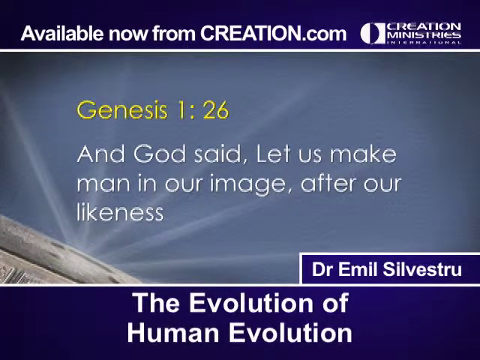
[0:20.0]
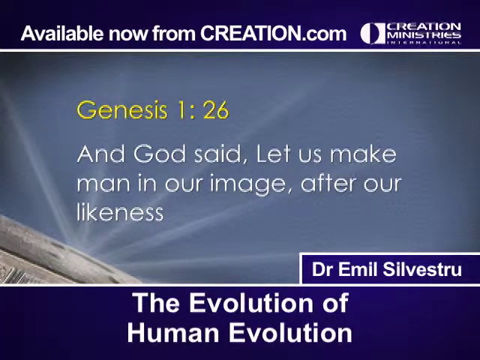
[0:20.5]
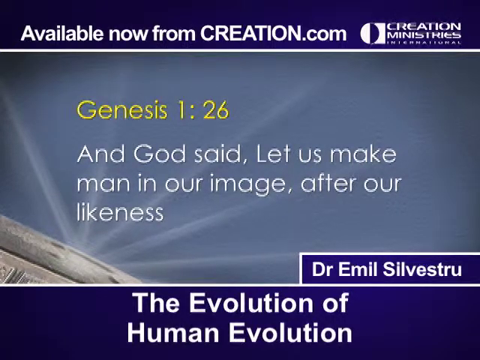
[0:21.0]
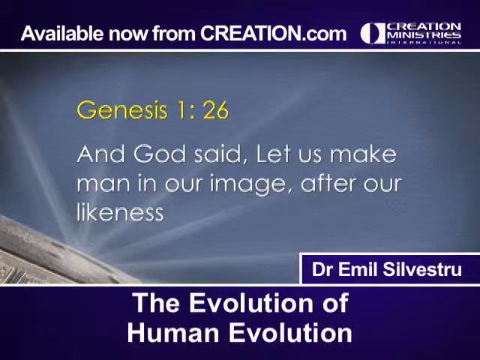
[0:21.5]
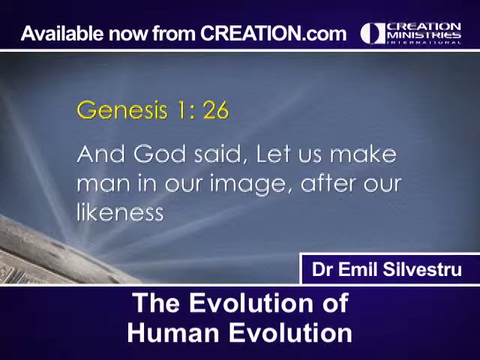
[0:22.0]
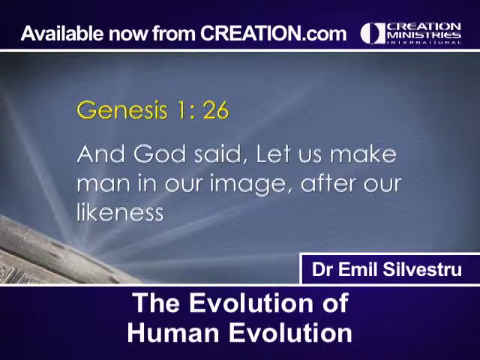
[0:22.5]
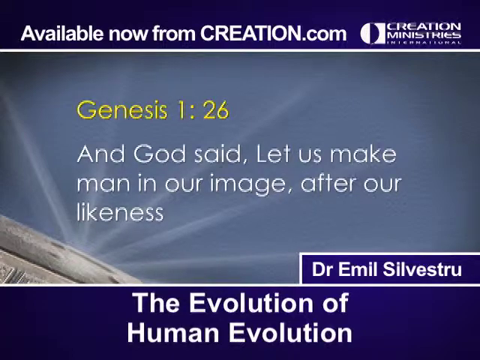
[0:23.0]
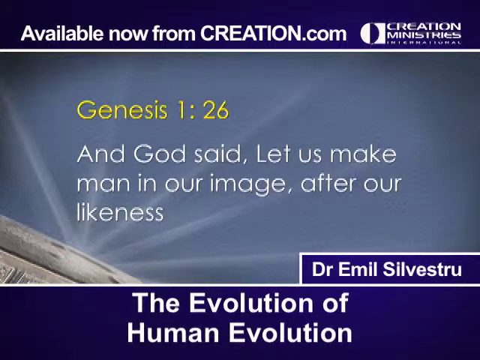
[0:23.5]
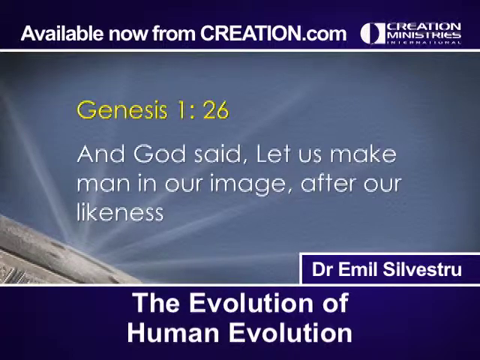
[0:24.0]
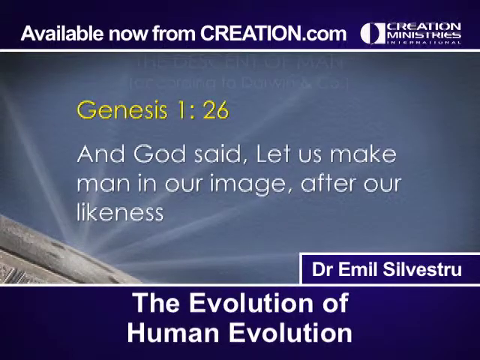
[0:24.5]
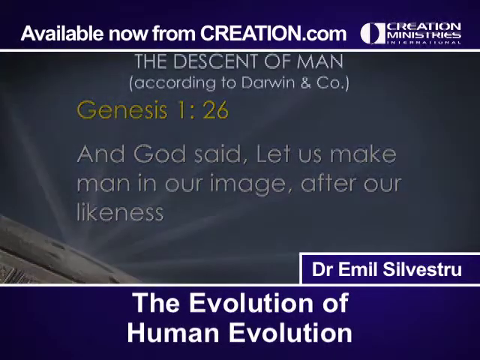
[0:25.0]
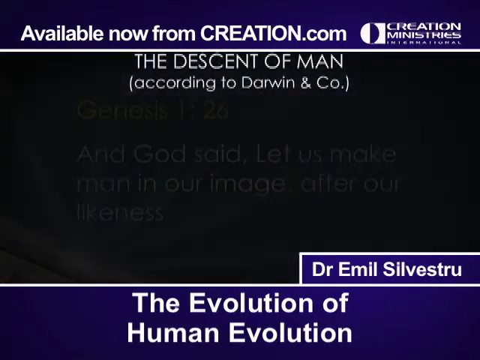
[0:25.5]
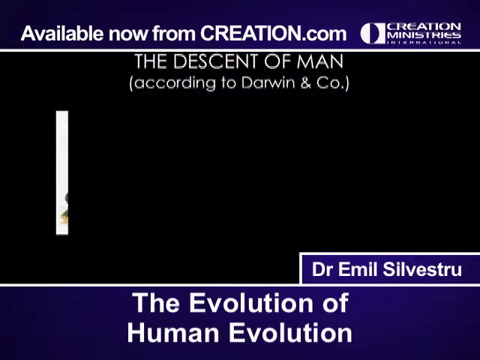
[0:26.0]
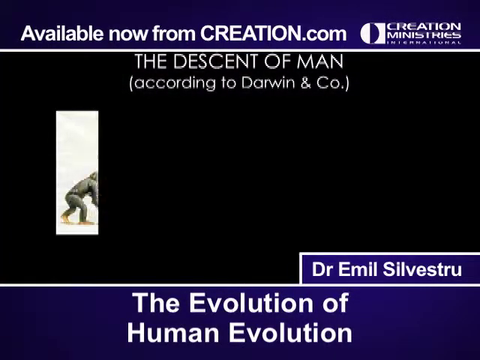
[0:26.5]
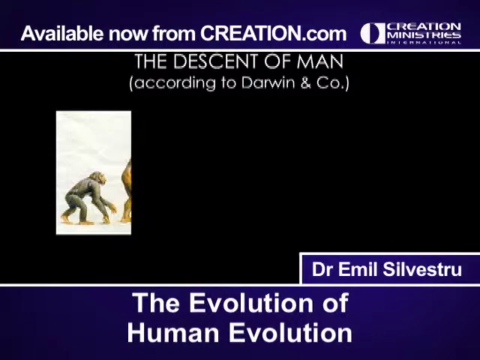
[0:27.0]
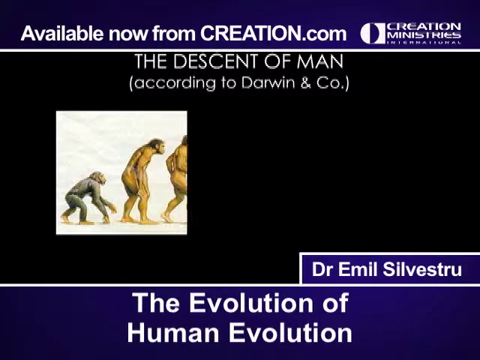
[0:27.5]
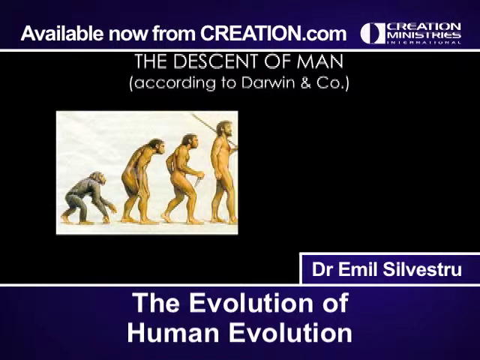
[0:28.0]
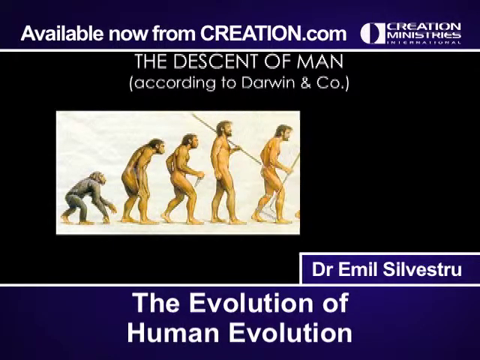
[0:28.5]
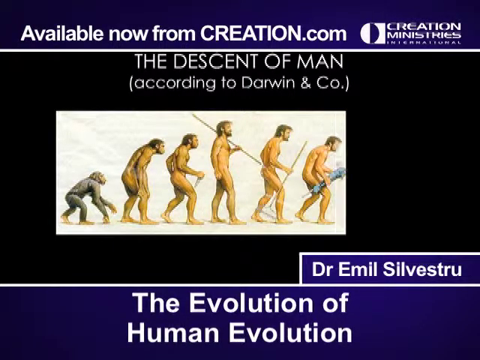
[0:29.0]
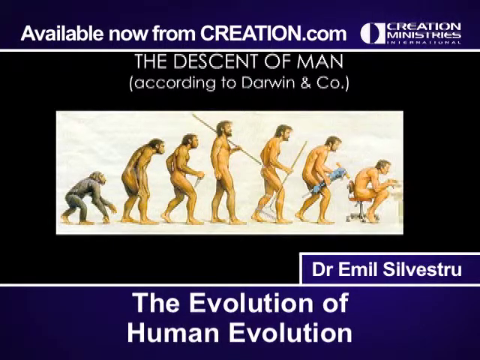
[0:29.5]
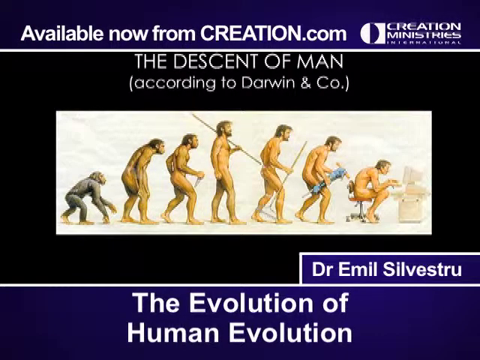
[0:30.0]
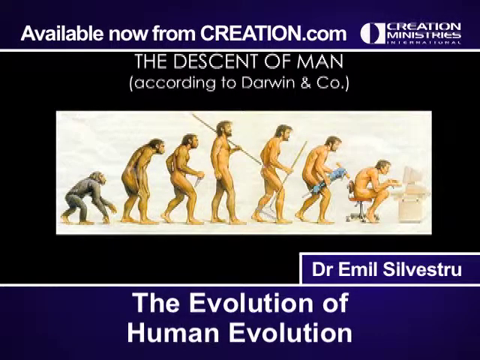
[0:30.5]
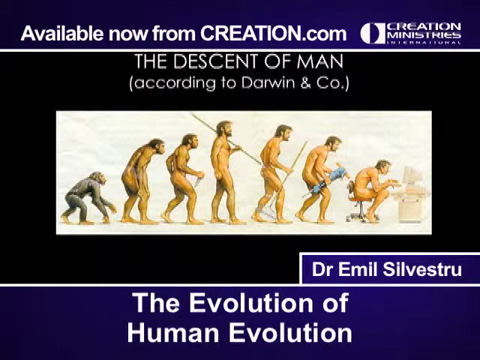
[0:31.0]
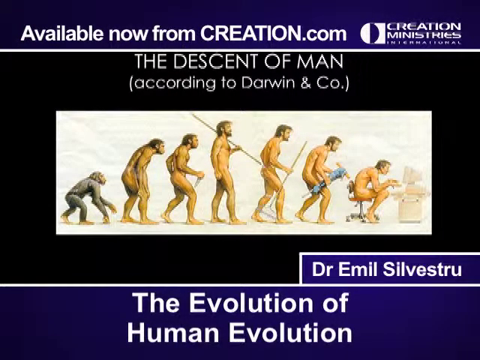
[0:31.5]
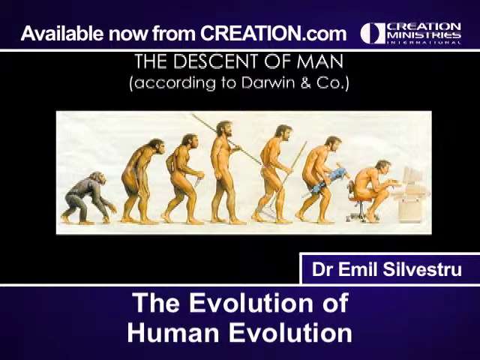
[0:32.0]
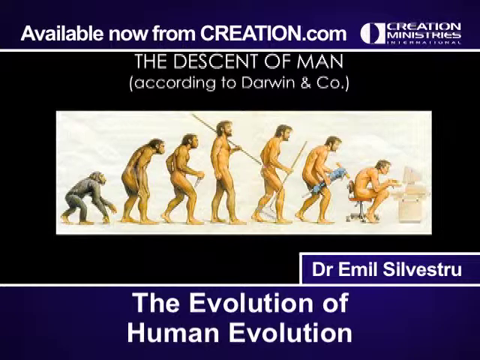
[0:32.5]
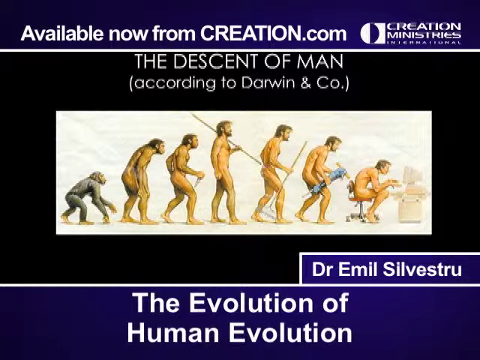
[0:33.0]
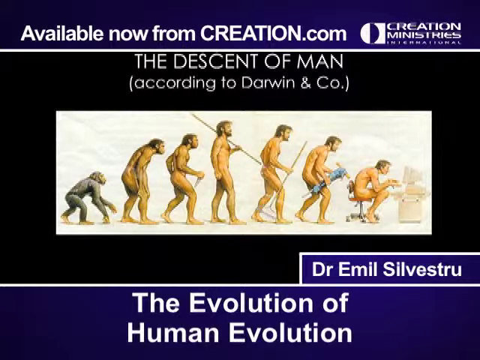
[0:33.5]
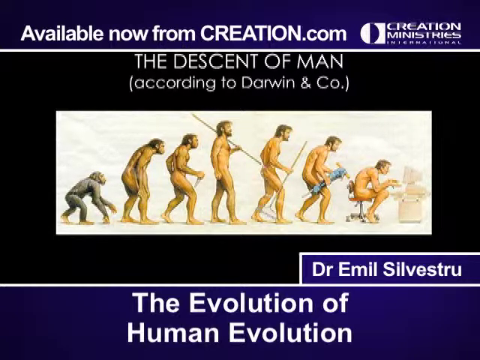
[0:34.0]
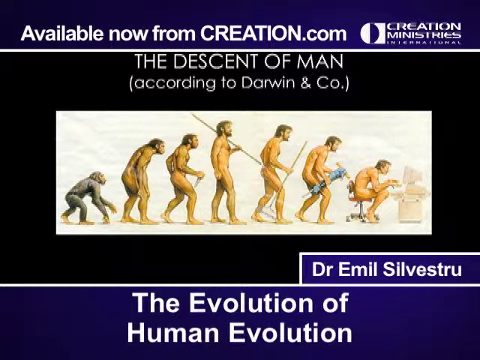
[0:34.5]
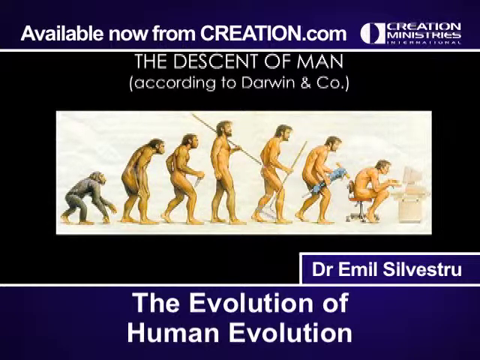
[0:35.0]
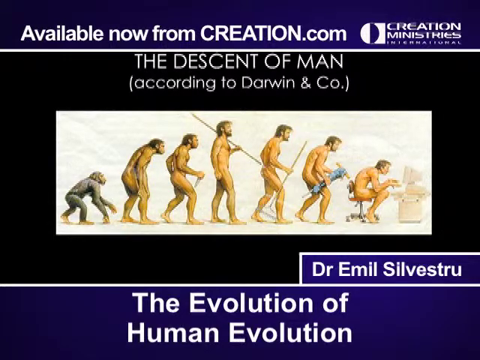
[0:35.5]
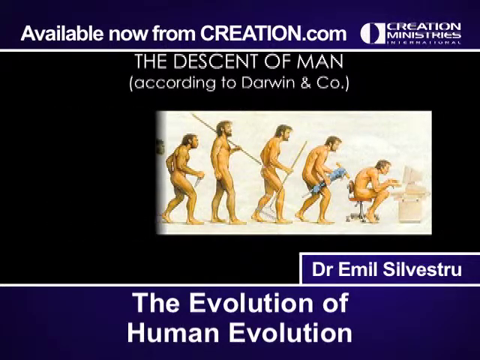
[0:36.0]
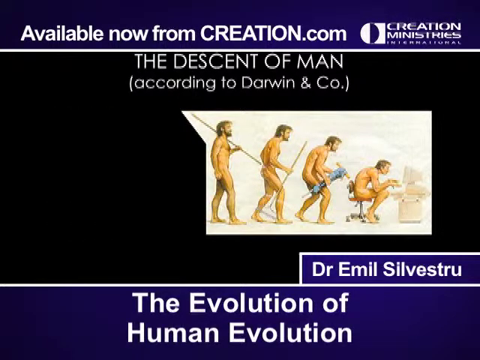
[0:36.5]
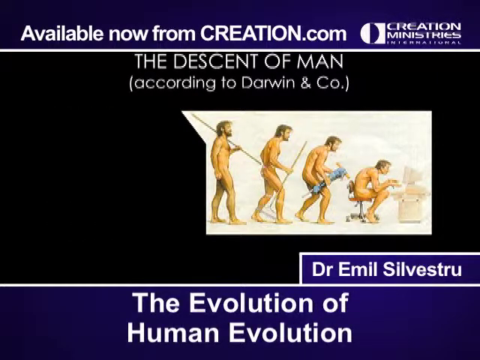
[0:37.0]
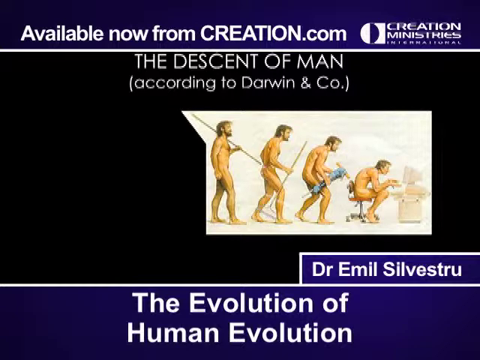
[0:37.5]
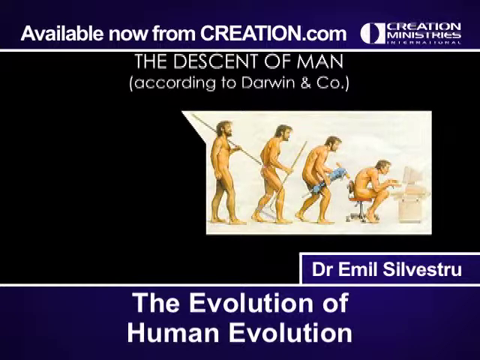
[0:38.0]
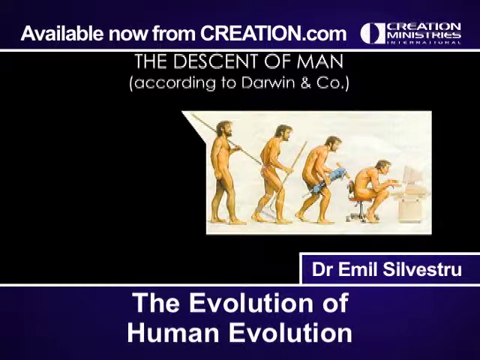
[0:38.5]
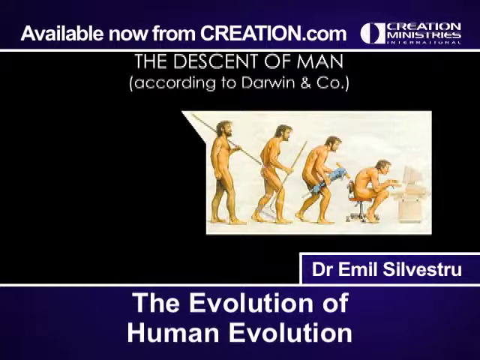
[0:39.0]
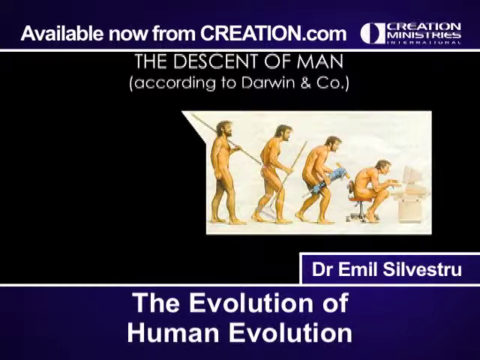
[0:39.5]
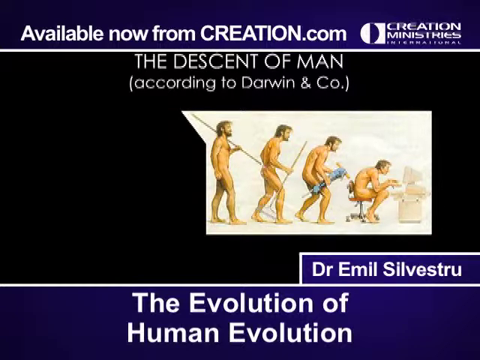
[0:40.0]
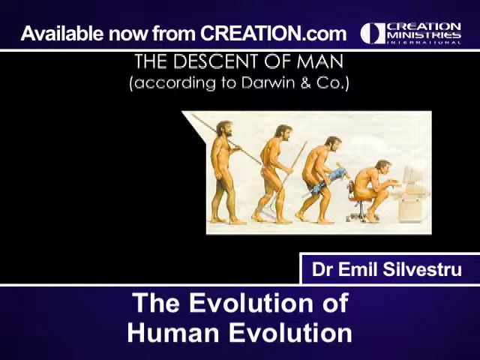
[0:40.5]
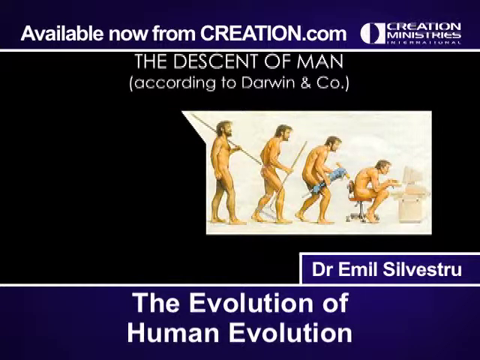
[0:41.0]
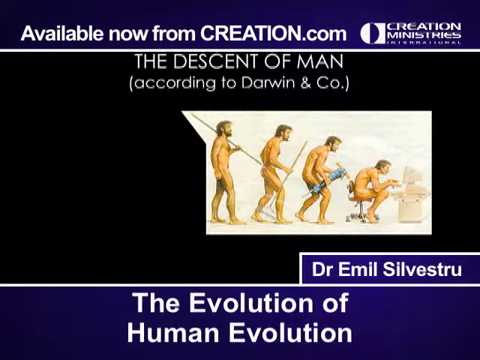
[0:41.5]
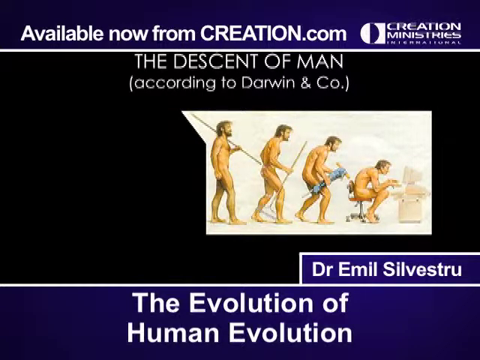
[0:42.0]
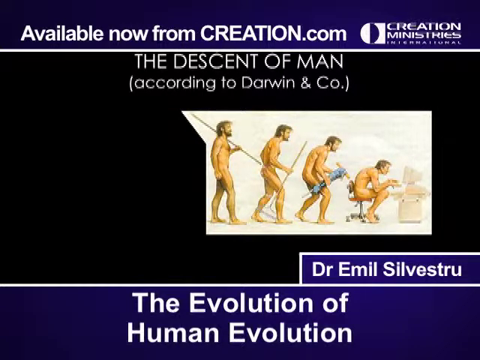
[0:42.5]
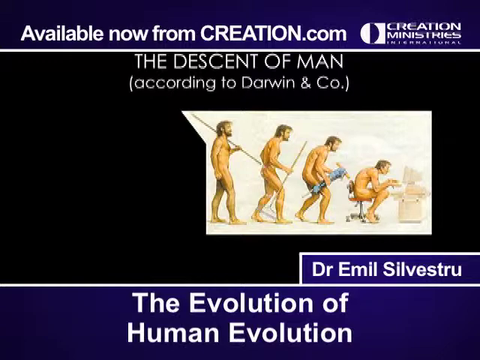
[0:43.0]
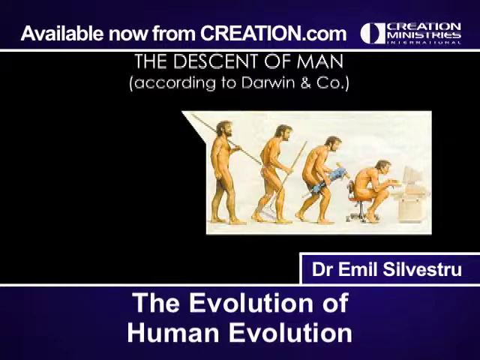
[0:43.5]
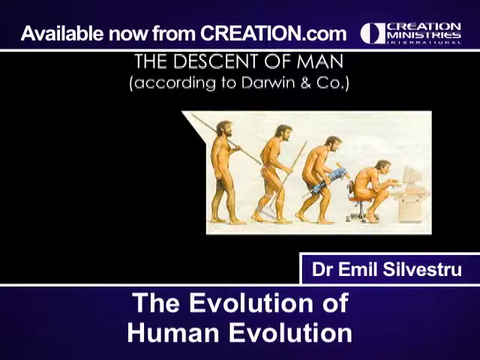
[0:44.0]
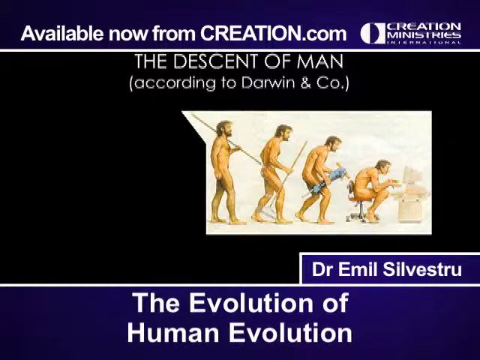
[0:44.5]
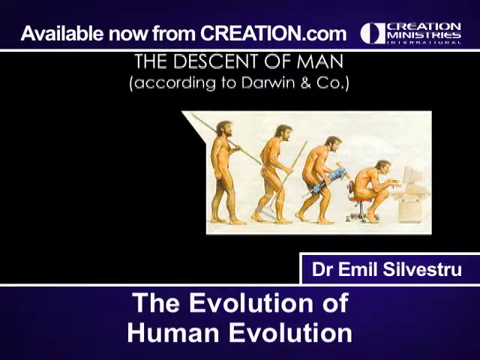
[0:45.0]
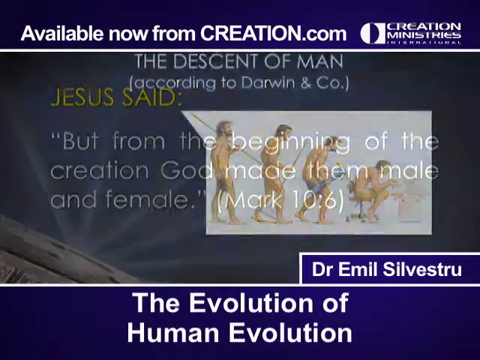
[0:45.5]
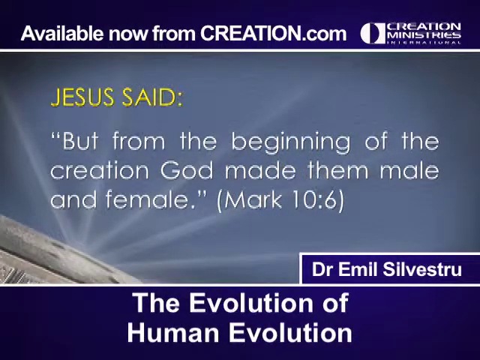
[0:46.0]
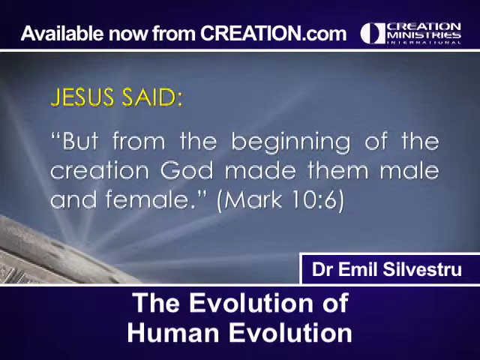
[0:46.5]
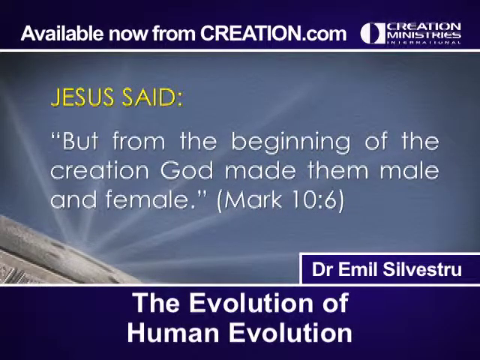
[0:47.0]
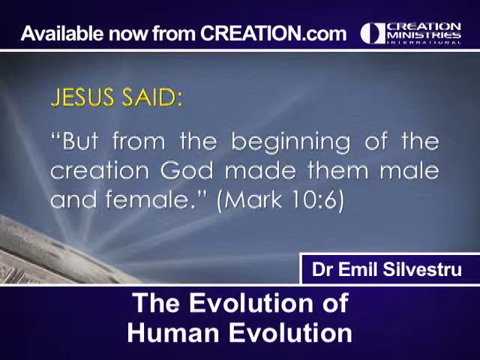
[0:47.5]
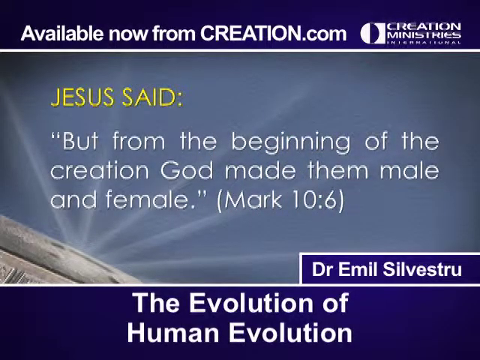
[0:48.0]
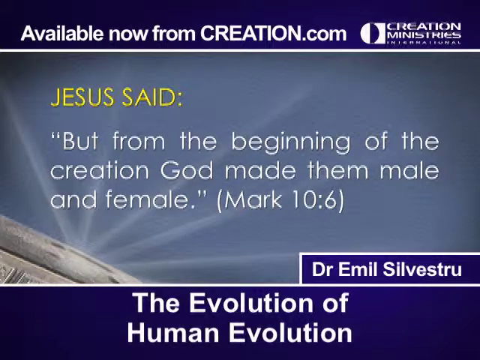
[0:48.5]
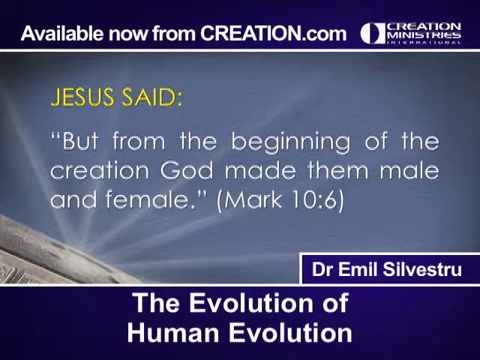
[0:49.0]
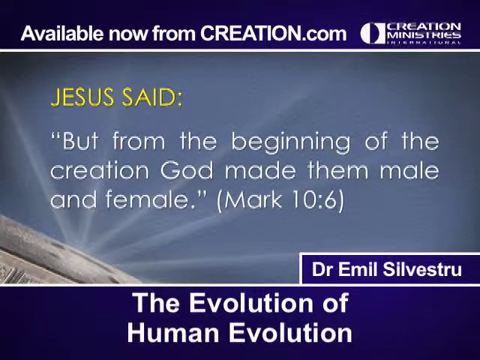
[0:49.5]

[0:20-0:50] Text on the screen reads "Genesis 1, 26. And God said, let us make man in our image after our likeness." Behind it, what look like rays of light come from the lower left corner; they appear to emanate from a concrete structure, though it is hard to say what it is. The text fades, and white text reads "The Descent of Man, according to Darwin and Company." An image begins to appear that looks like an illustration: the classic series of two-legged creatures. On the left a monkey crawls forward on all fours. In front of it a man walks upright but hunched over. The next man walks more upright and holds a knife in one hand. Then a man walks very upright with a spear over his shoulder. The next man is kind of hunched over again and holds something like a scythe. The following man is hunched over even more and holds what looks like a jackhammer. The last man is hunched over completely, sitting on a chair and tapping away at a computer.